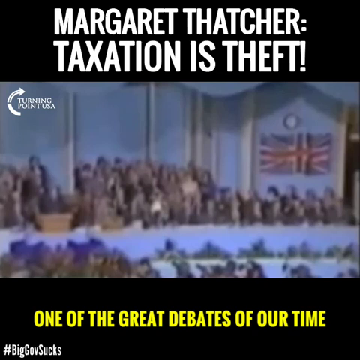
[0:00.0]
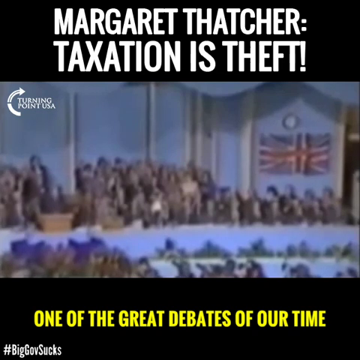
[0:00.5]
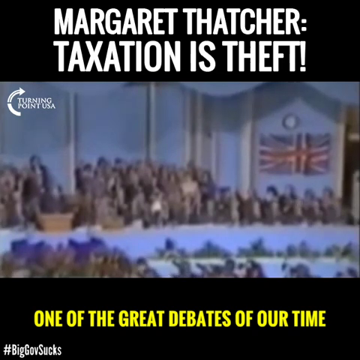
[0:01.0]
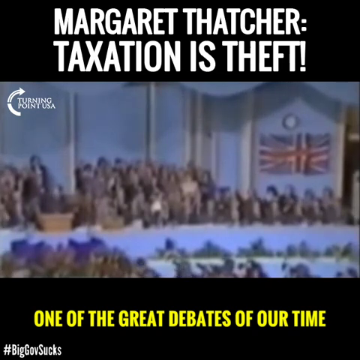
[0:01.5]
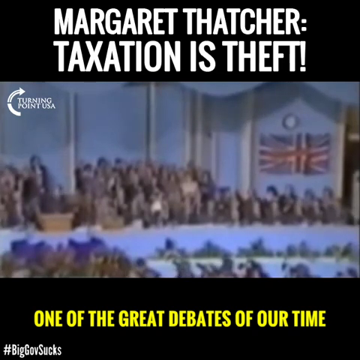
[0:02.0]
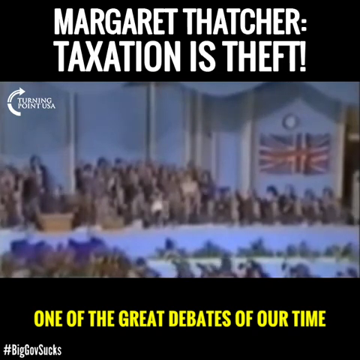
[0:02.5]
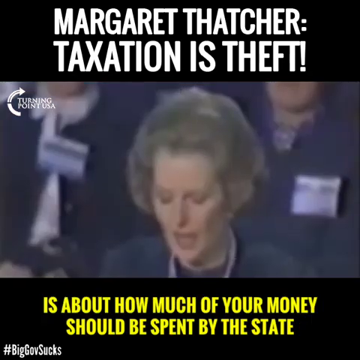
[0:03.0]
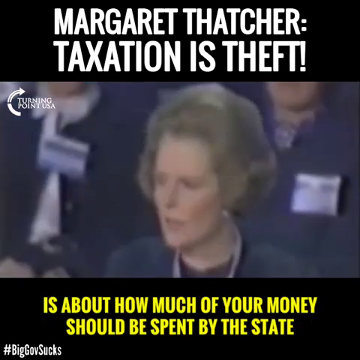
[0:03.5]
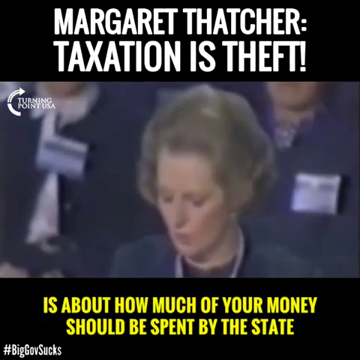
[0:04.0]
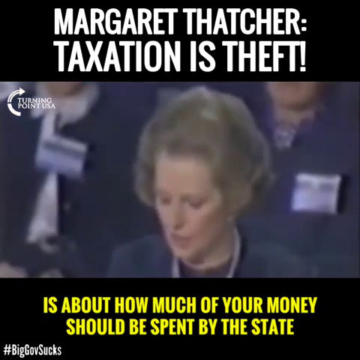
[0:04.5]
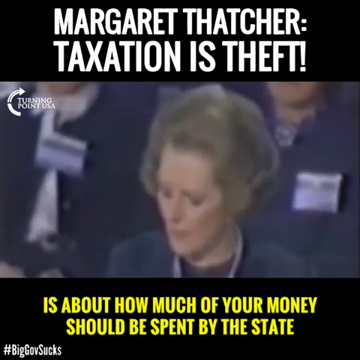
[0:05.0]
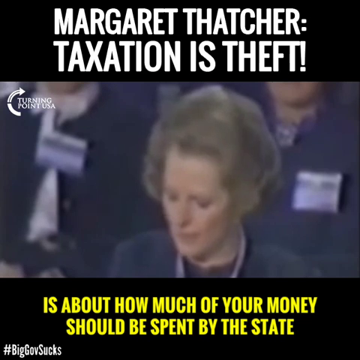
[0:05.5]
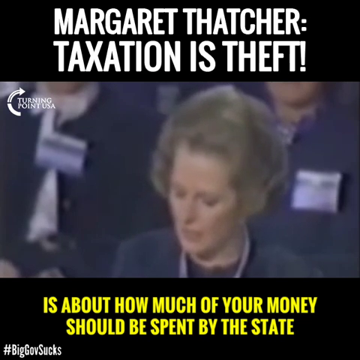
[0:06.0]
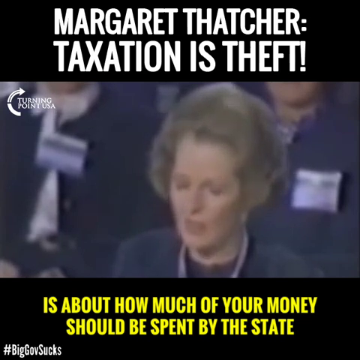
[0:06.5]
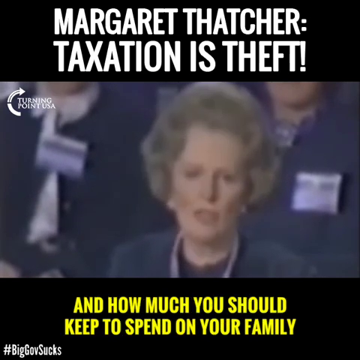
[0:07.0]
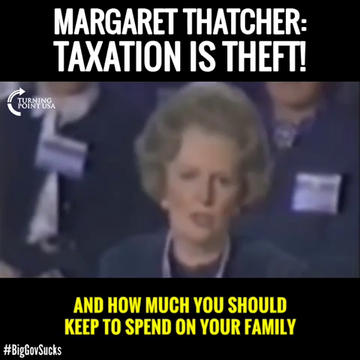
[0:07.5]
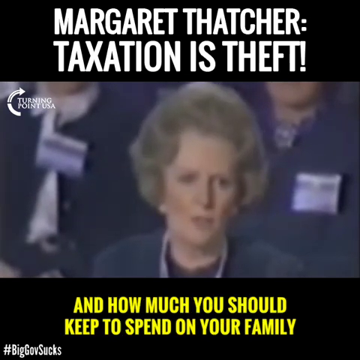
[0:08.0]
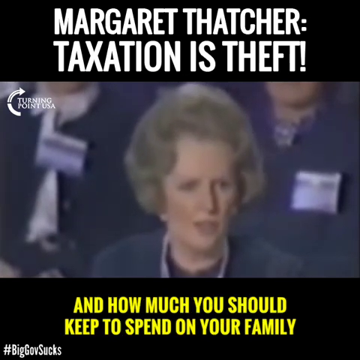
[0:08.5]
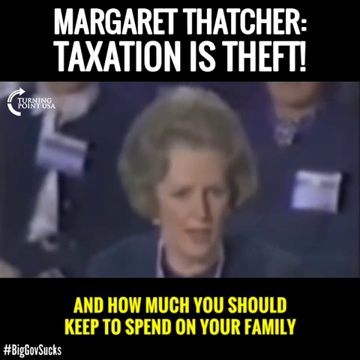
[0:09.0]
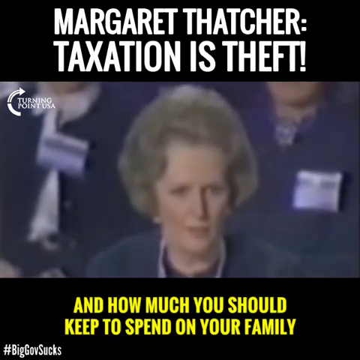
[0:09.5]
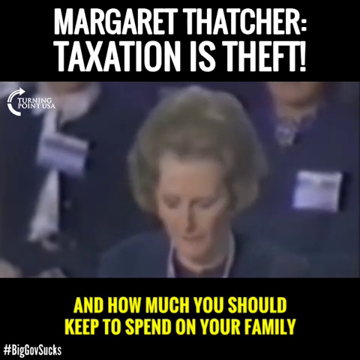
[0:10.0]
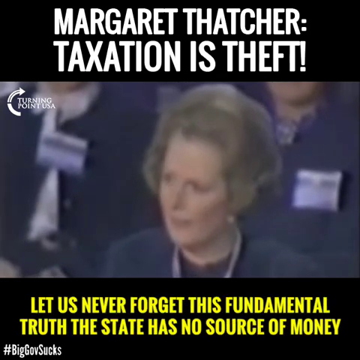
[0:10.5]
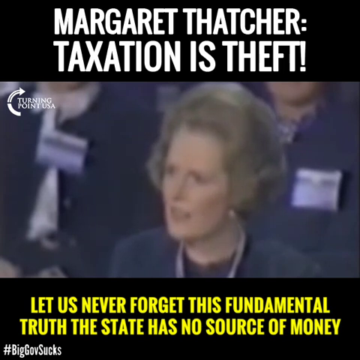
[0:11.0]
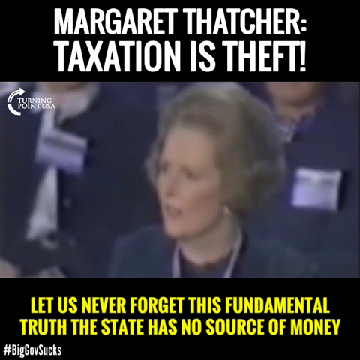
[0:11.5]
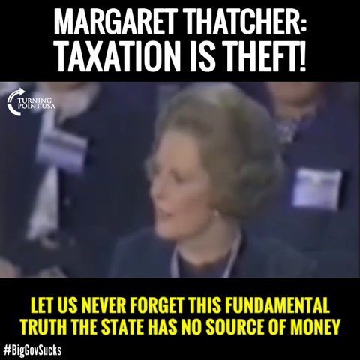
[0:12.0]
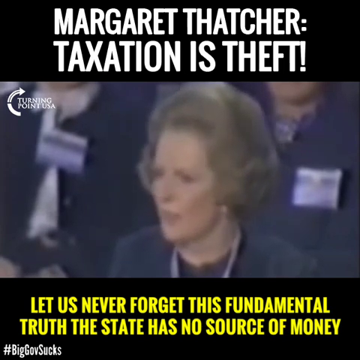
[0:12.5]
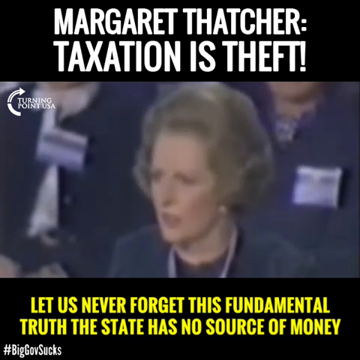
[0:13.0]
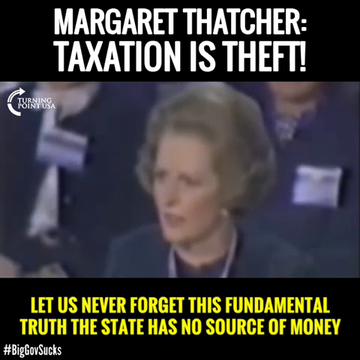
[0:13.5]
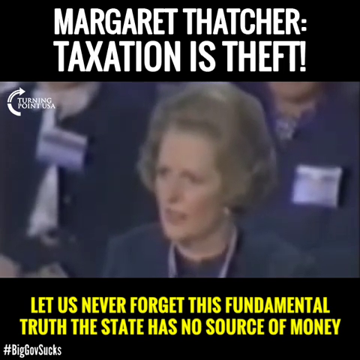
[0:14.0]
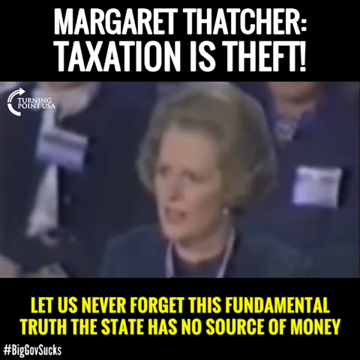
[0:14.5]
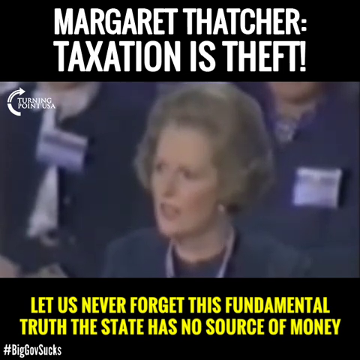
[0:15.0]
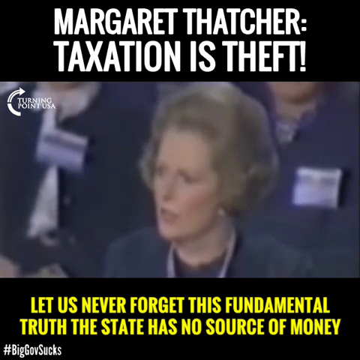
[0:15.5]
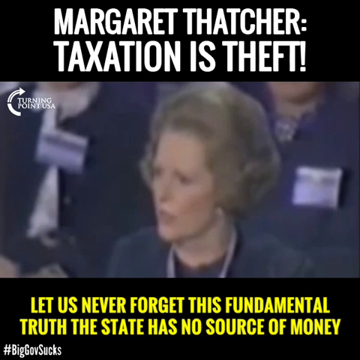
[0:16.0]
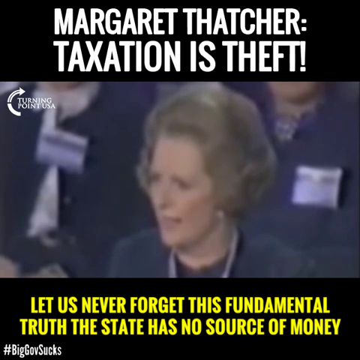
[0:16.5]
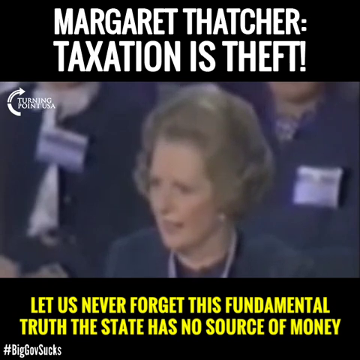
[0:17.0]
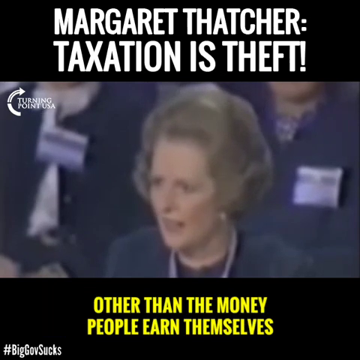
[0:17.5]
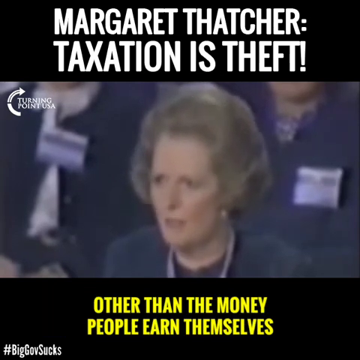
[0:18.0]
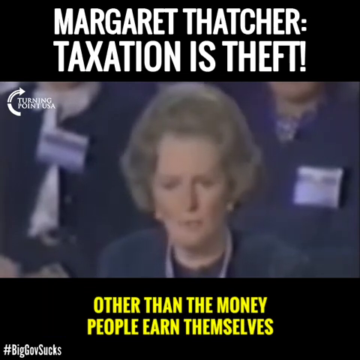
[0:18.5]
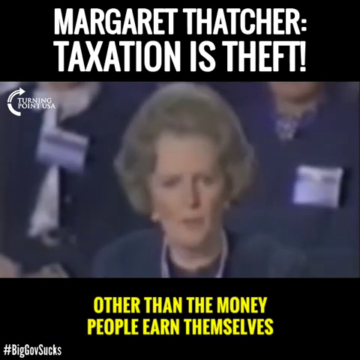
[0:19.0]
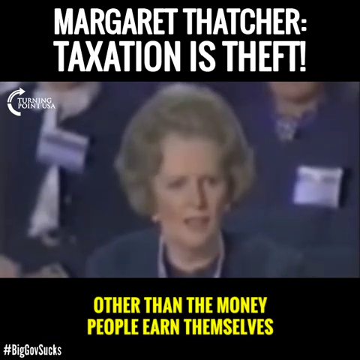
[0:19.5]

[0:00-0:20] Text at the top reads "Margaret Thatcher. Taxation is theft." and below it "one of the greatest debates of our time." A woman with brown hair and a dark top is at the center, speaking, with some people visible behind her. Yellow text underneath refers to money that should be spent by the state and how much you should keep to spend on your family. She moves her head left and right as if speaking to people throughout the room. The text then reads "let us never forget this fundamental truth. The state has no source of money," followed by "other than the money people earn themselves." She appears to be sitting and talking to a group of people who are listening to her.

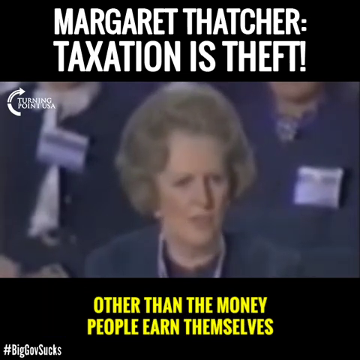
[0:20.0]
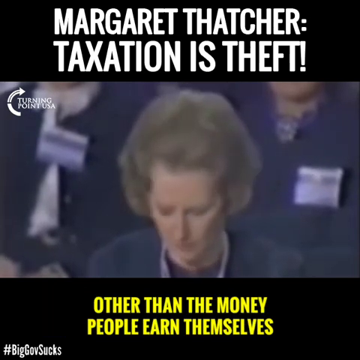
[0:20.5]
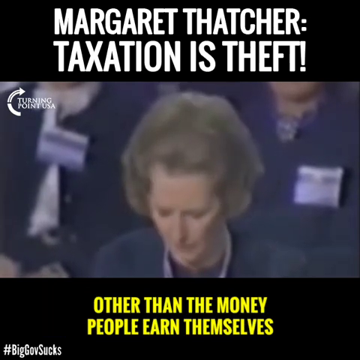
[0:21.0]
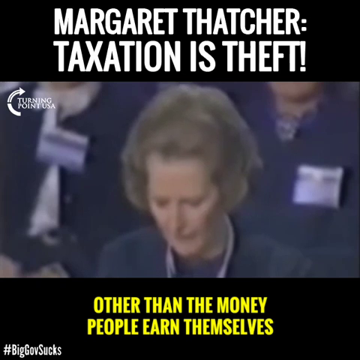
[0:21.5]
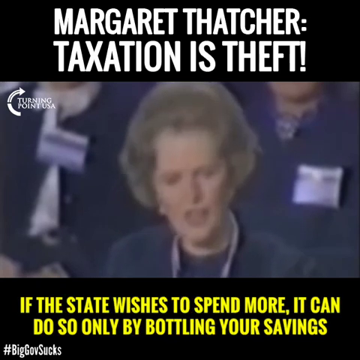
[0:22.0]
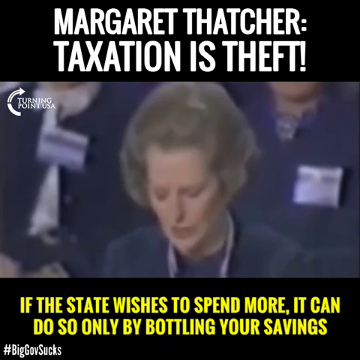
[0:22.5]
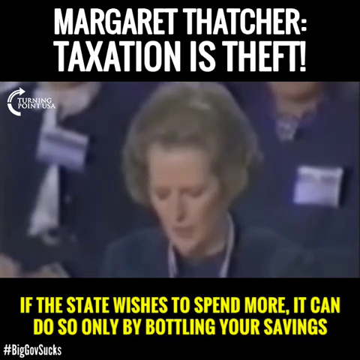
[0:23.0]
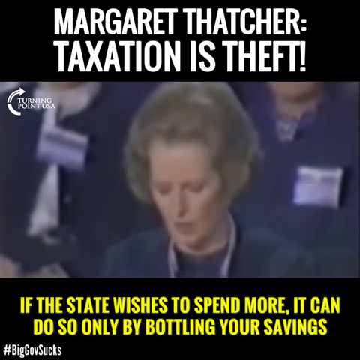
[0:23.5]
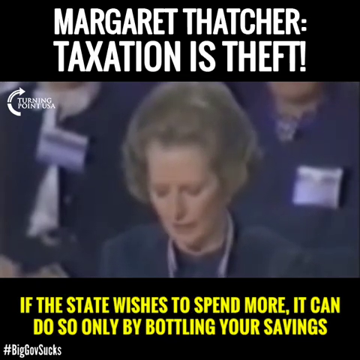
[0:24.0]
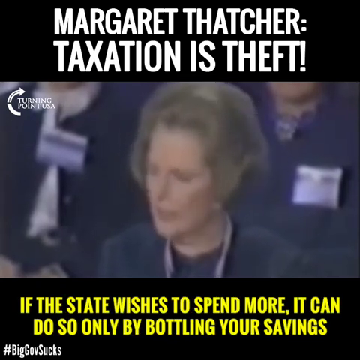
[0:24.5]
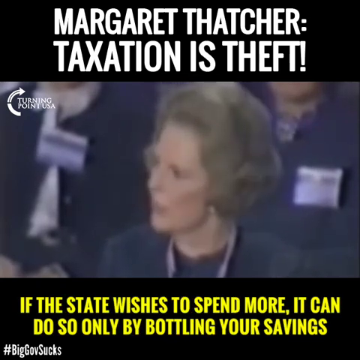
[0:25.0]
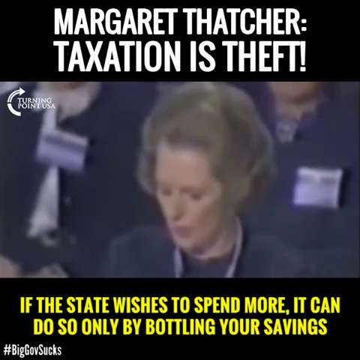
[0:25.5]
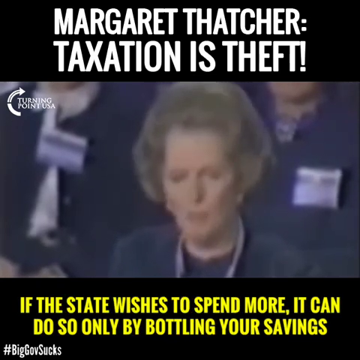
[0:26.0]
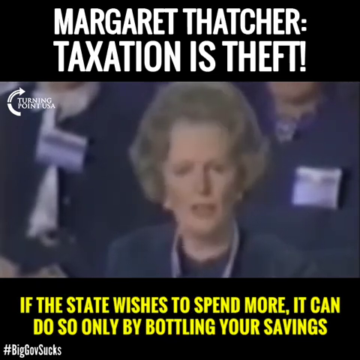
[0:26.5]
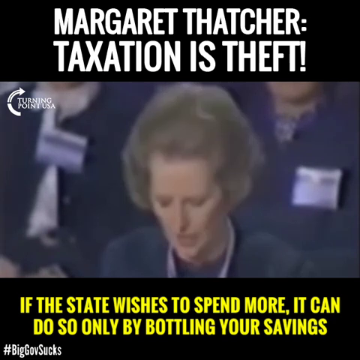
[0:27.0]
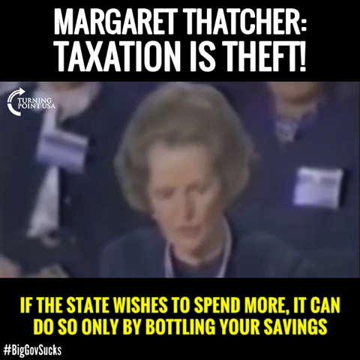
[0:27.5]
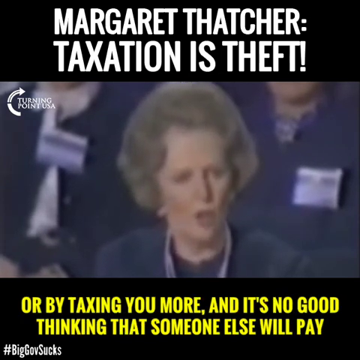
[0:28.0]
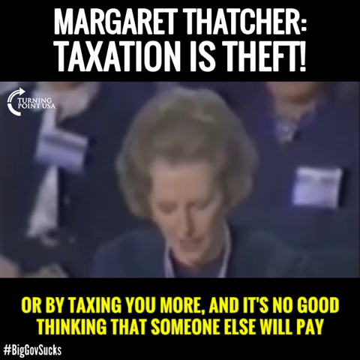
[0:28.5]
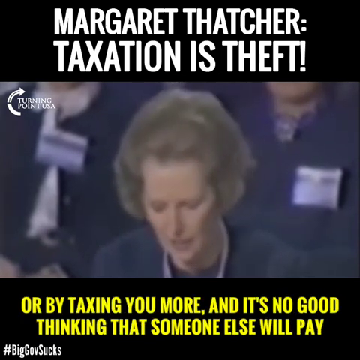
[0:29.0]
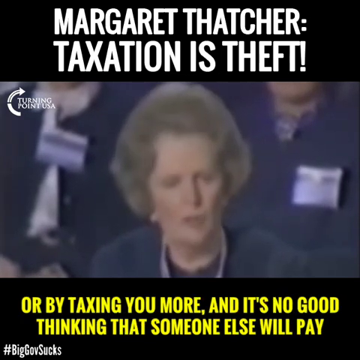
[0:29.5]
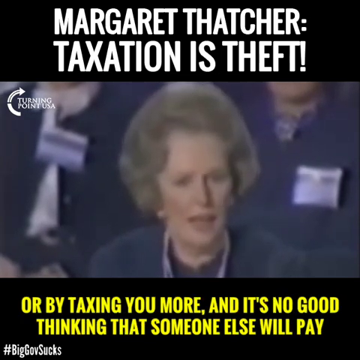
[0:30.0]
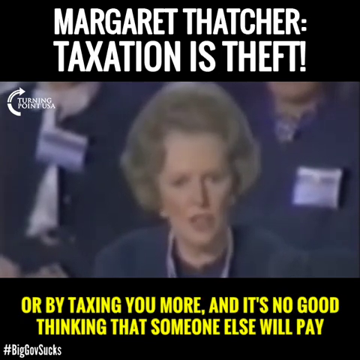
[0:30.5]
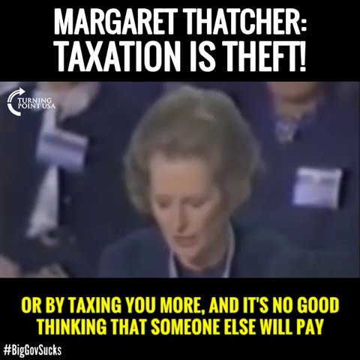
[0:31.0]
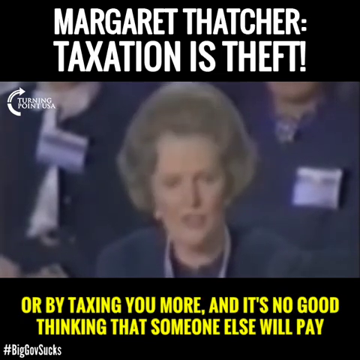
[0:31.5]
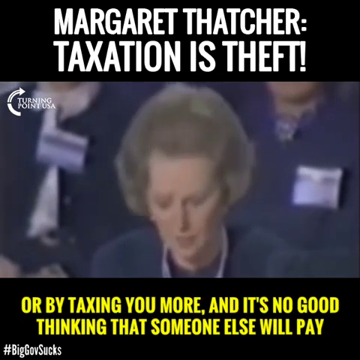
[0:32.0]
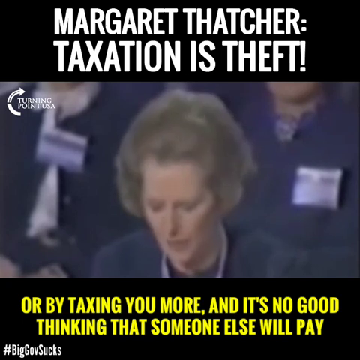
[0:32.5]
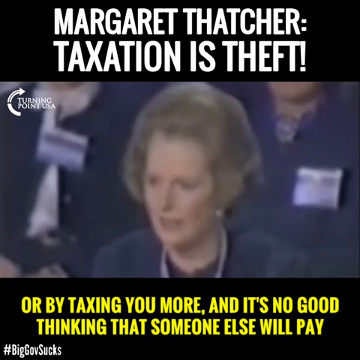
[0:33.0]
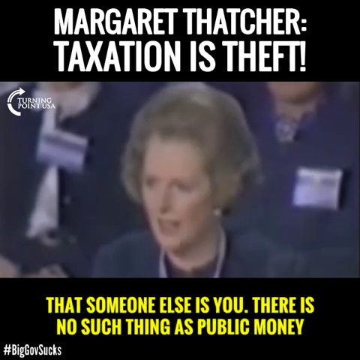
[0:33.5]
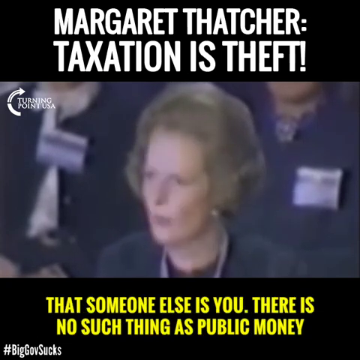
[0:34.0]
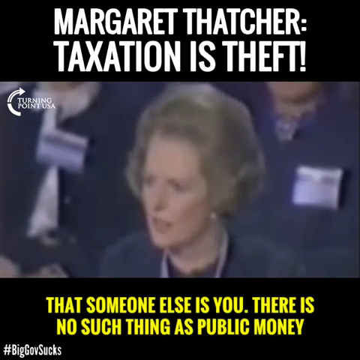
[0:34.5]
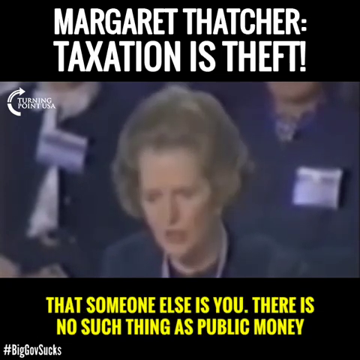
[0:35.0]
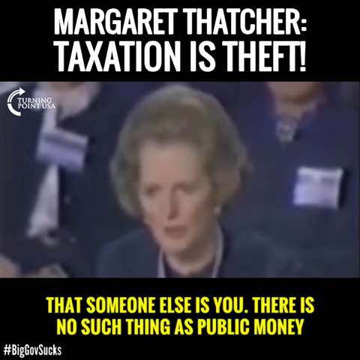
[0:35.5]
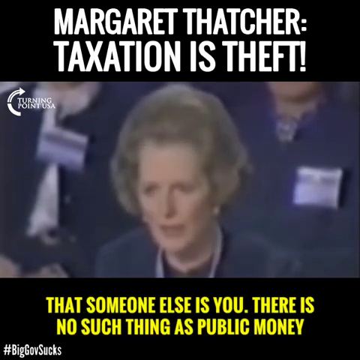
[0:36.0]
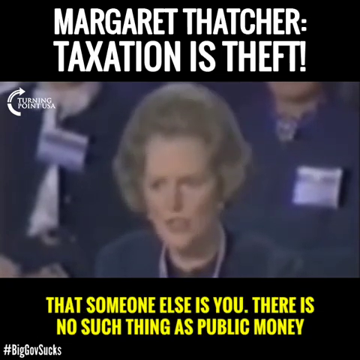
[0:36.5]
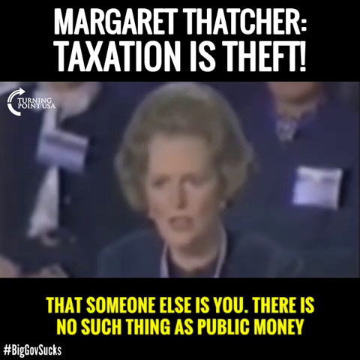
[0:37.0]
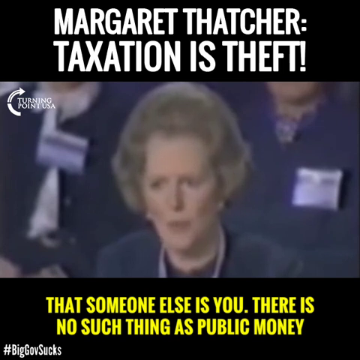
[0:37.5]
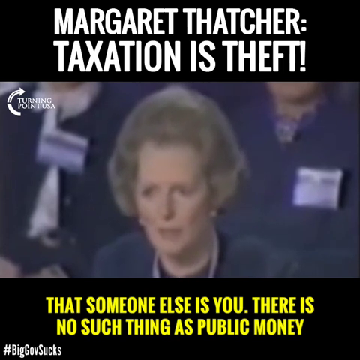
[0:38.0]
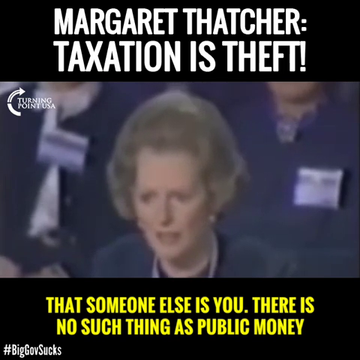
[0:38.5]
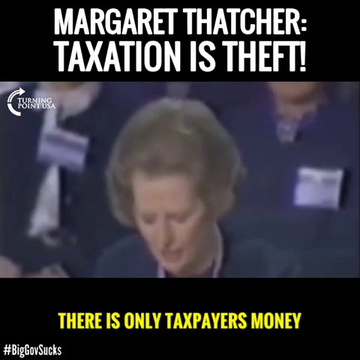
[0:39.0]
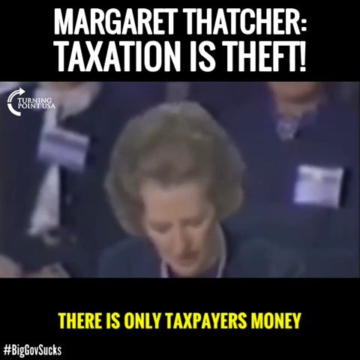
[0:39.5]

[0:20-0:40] At the top of the screen the text reads "Margaret Thatcher. Taxation is theft." Underneath, it says "other than the money people earn themselves." A woman with brown hair and a dark top is speaking, occasionally looking down as if at notes. The text at the bottom changes to "if the state wishes to spend more, it can do so only by" and, as she looks up, changes to "or by taxing you more. And it's no good thinking that someone else will pay." She keeps looking down and up as she speaks. The text then says "that someone else is you. There is no such thing as public money." She shakes her head a bit and looks back down, and finally the text reads "there is only taxpayers' money." At one point what appears to be a flash crosses her face, looking like someone taking a picture, suggesting she may be speaking to a crowd in a public setting.